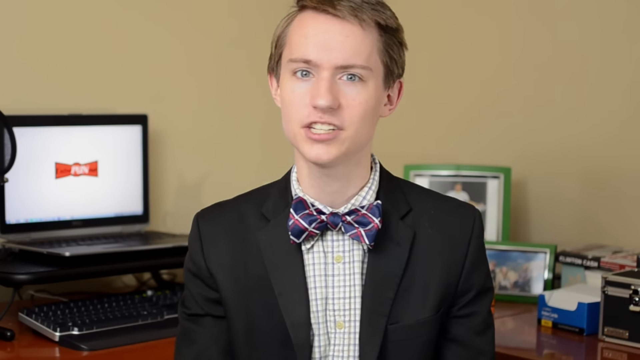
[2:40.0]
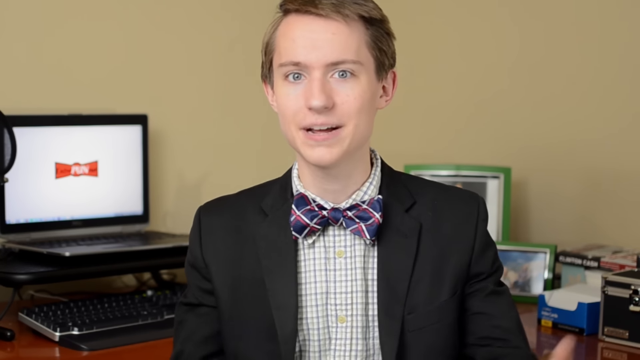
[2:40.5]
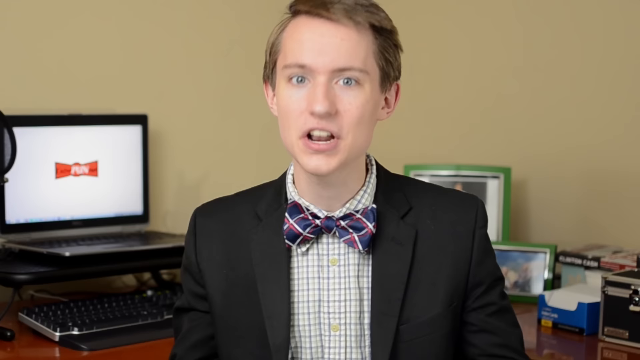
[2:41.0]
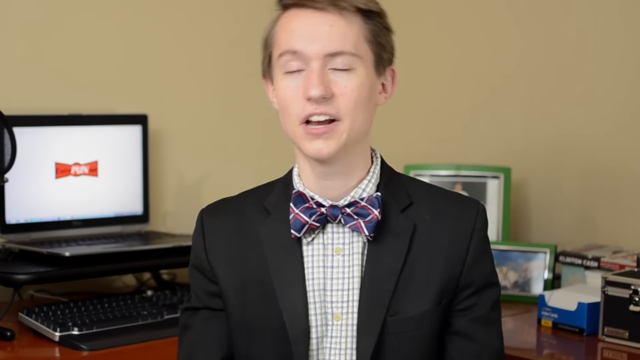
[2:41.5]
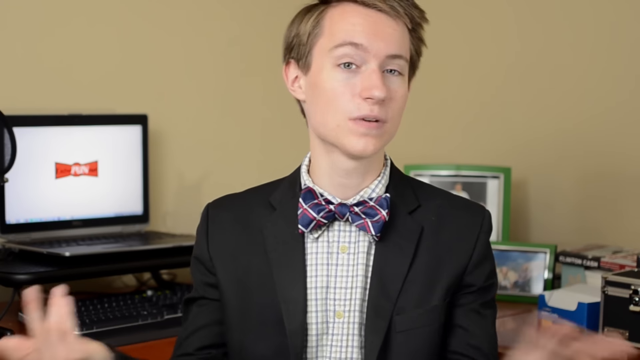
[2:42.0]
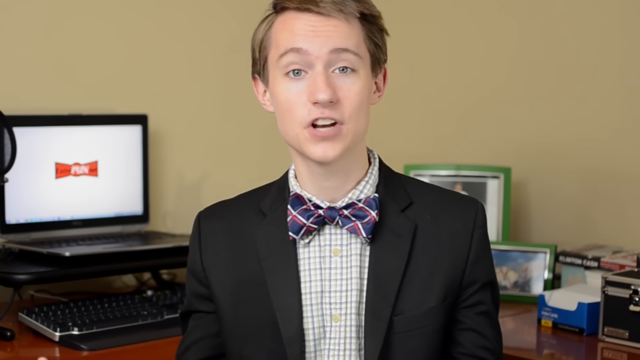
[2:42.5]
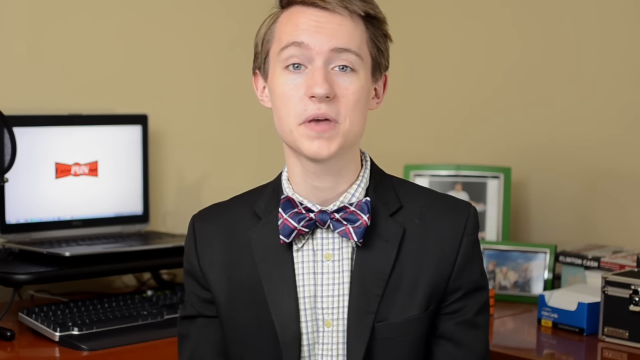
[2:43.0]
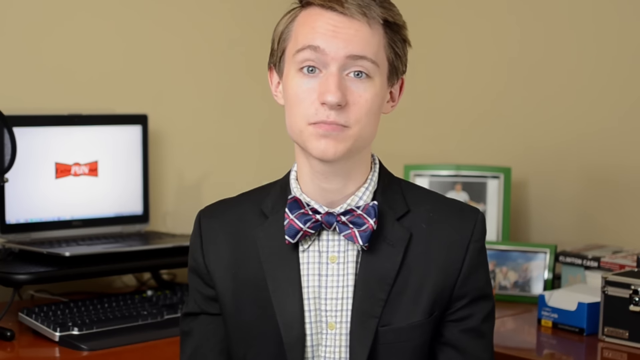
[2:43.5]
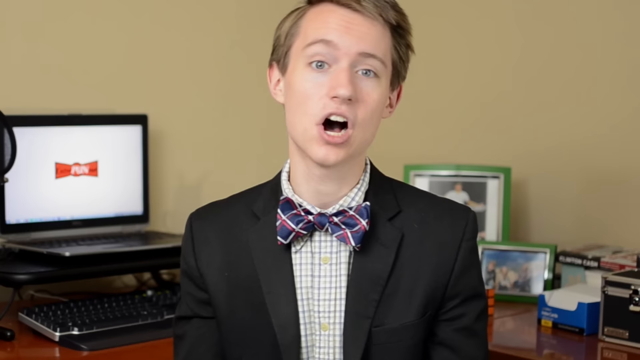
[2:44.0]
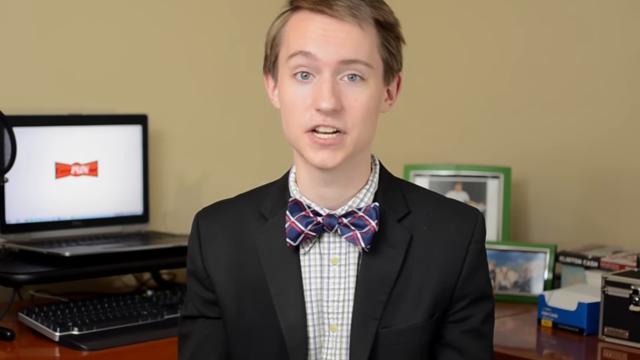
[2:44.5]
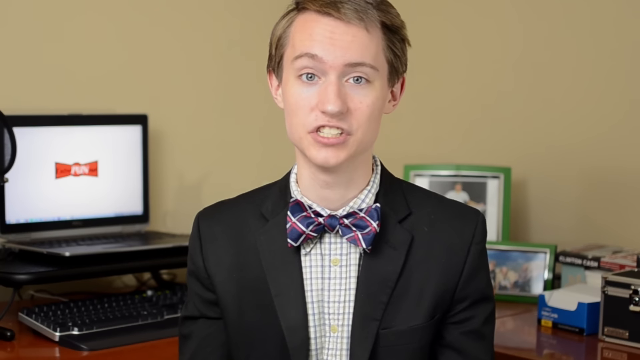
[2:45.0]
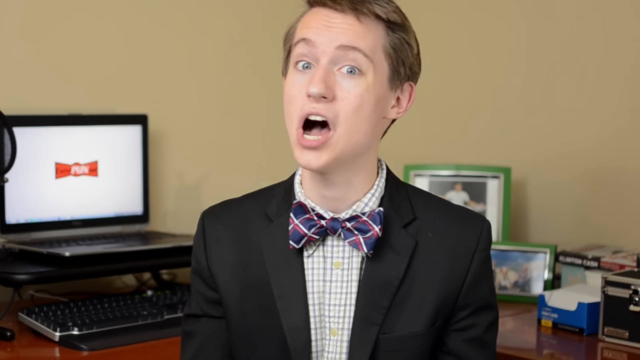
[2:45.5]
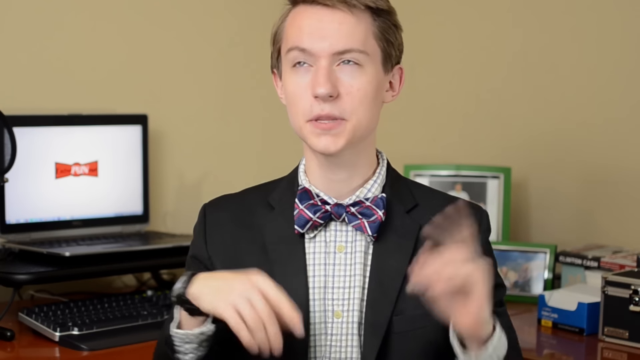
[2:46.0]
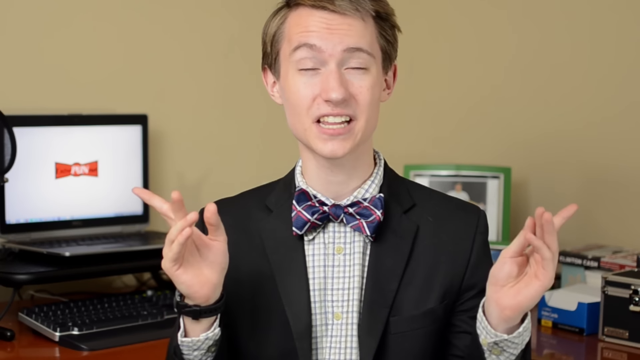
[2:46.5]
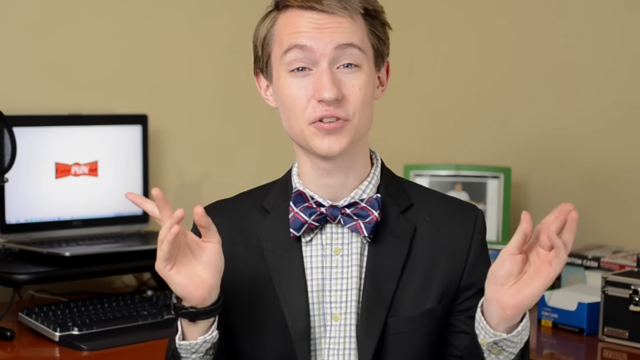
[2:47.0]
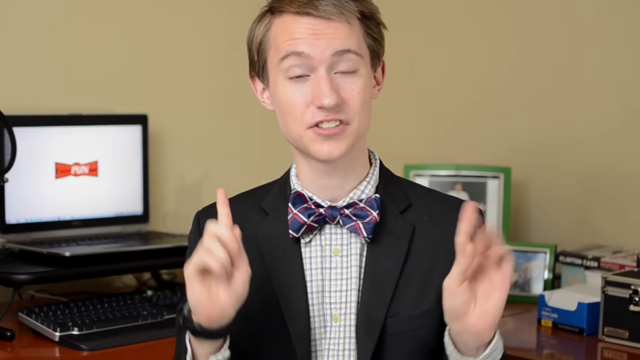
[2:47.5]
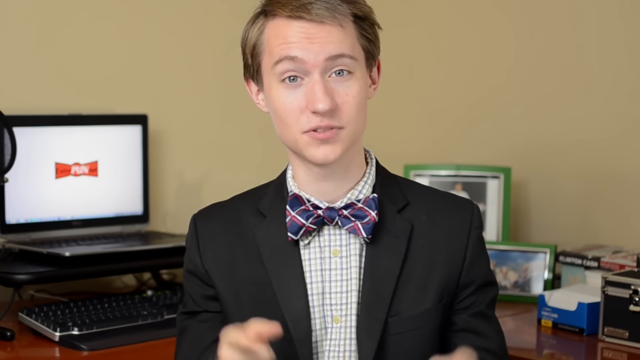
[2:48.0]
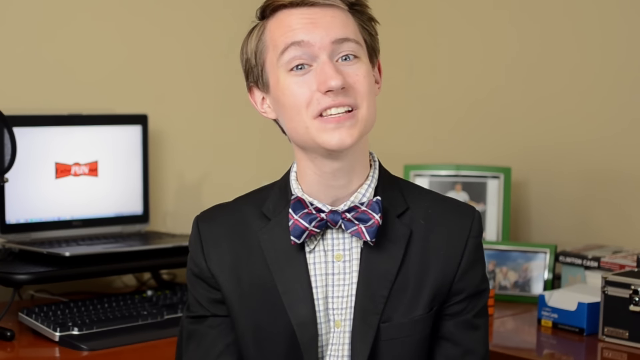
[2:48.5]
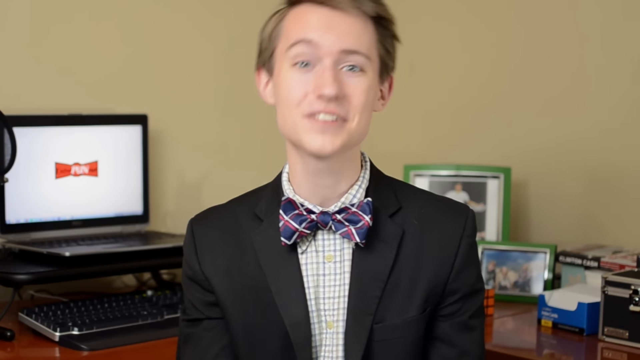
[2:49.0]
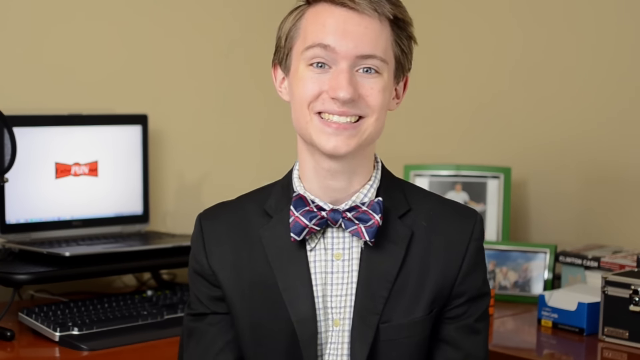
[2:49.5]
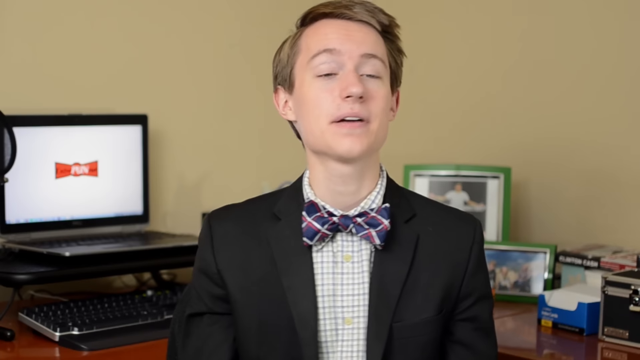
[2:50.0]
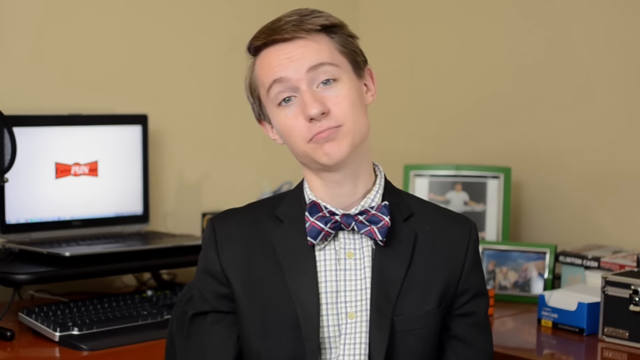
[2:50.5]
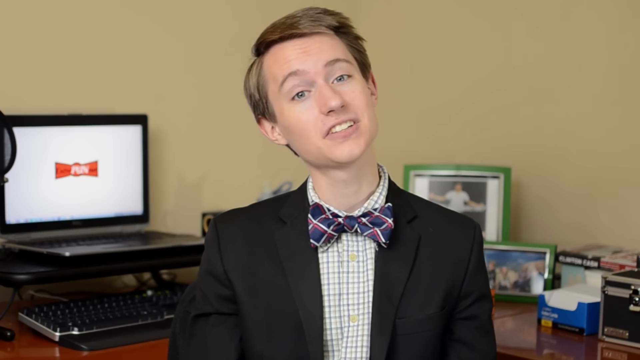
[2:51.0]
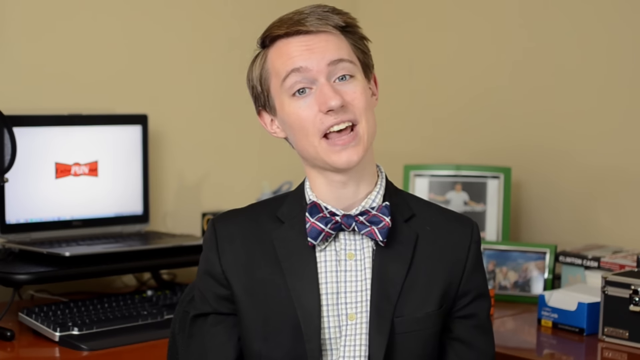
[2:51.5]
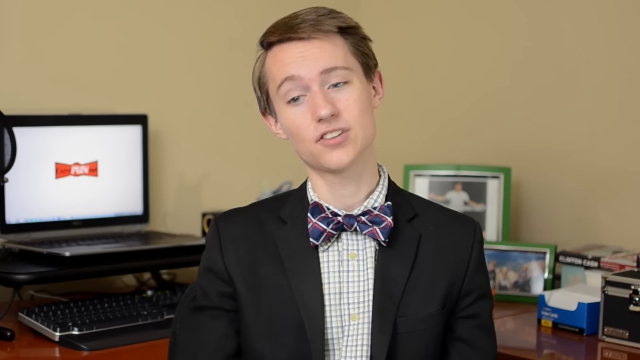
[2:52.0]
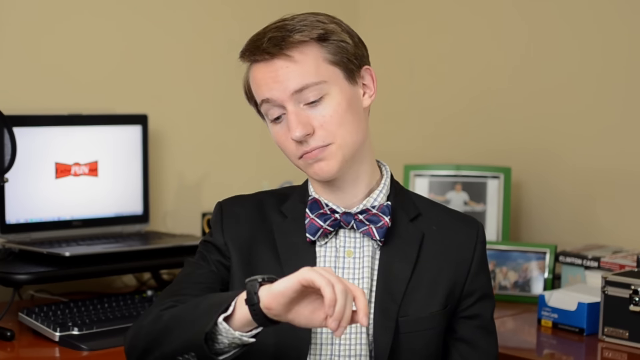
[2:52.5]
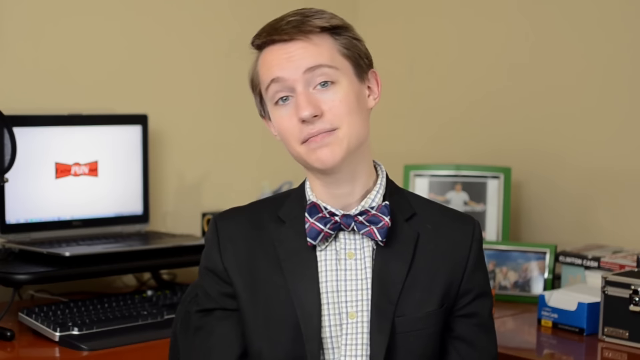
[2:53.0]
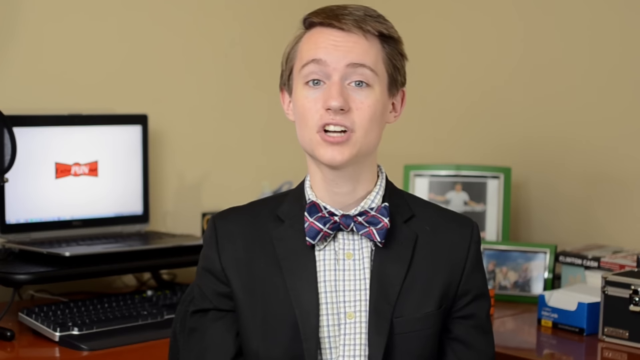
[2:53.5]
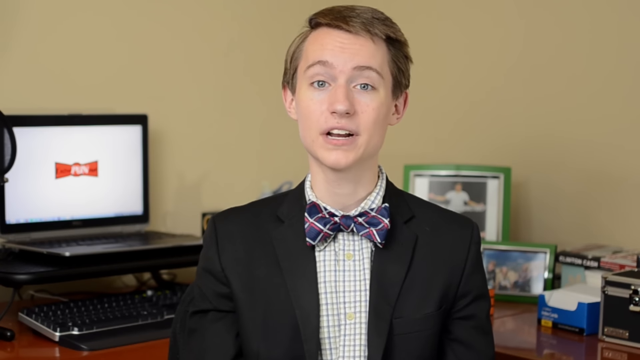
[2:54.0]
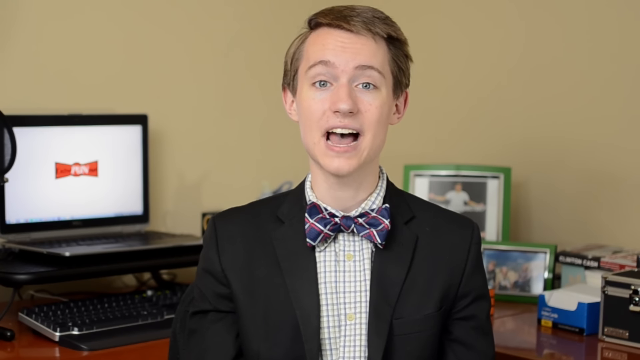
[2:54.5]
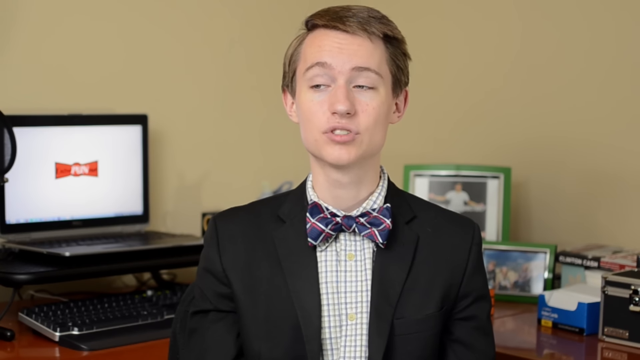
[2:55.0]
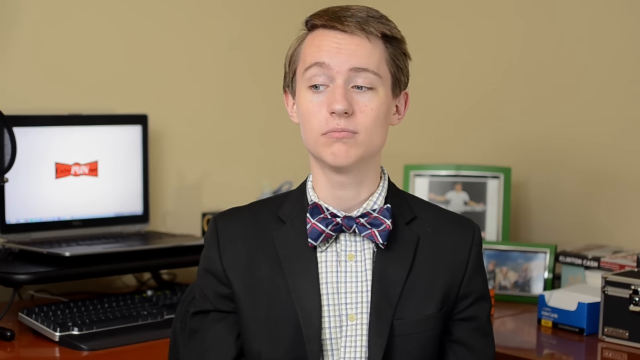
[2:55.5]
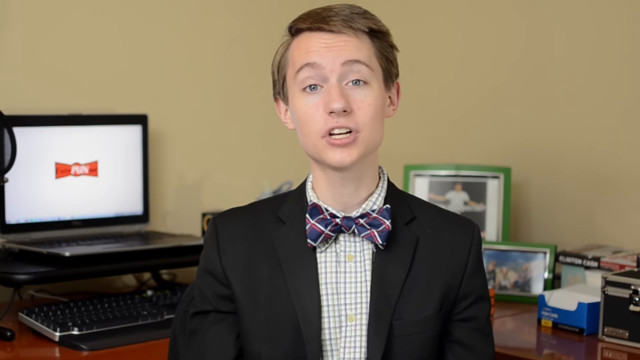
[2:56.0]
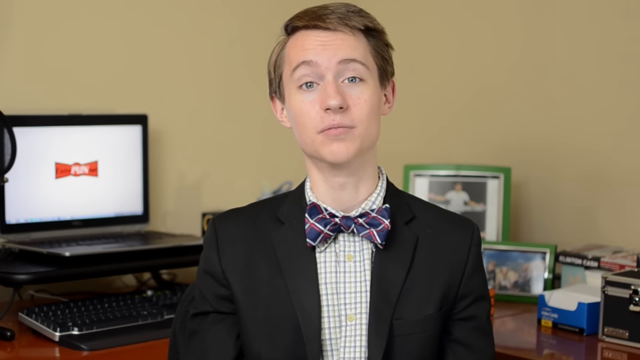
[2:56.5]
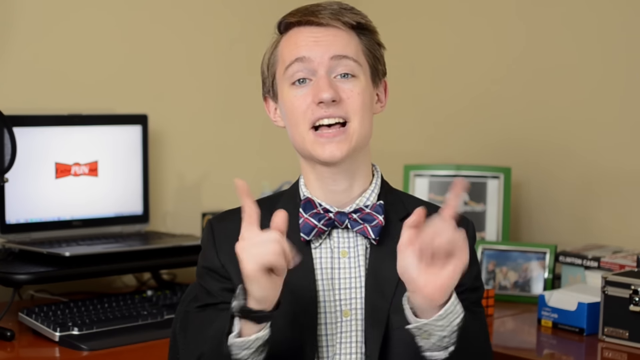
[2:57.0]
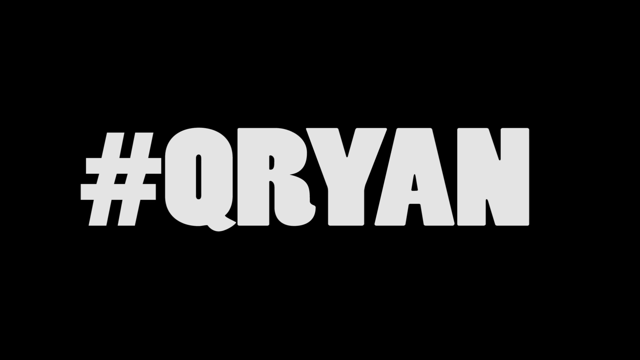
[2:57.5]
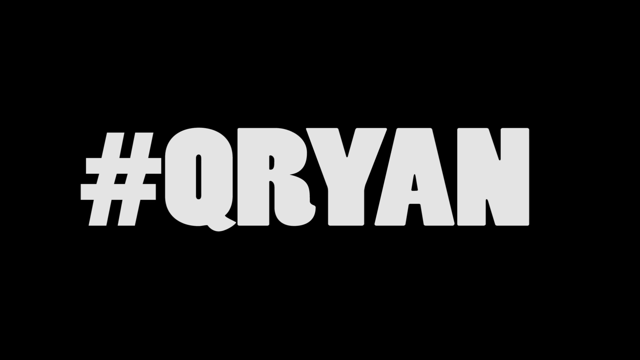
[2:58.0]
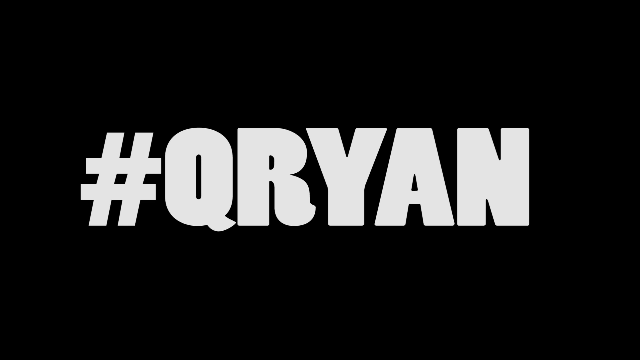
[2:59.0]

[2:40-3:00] In the same bedroom-like setting, the single person in the shot has a white skin tone, short brown hair combed to the side, and looks very young and very clean-shaven. He wears a black jacket, a white buttoned-up shirt with vertical gray stripes, and a dark blue tie with red and white stripes. The wall is beige; on the left is a laptop that is turned on with a white screen, and on the right behind him are pictures in green-bordered portraits and some books. He looks directly at the camera, puts his arms up slightly at the very bottom of the frame, raises both hands vertically at his sides, and then points toward the camera. After a quick scene change in the same room, he raises his right hand, showing a black watch on his wrist, and kind of looks at it for a second before dropping his hand as he continues speaking to the camera. He raises both hands in a sort of pointing motion directly at the camera. The screen then goes black, and in the middle appears bold white text reading "#QRYAN".